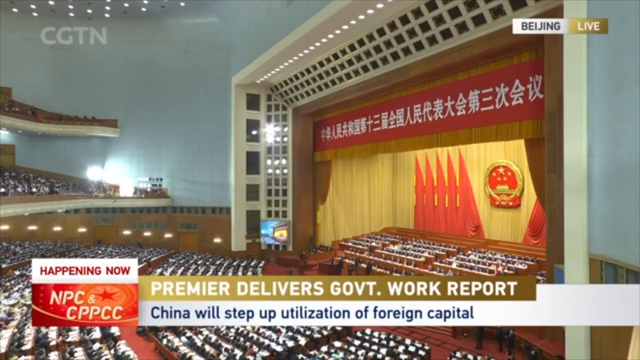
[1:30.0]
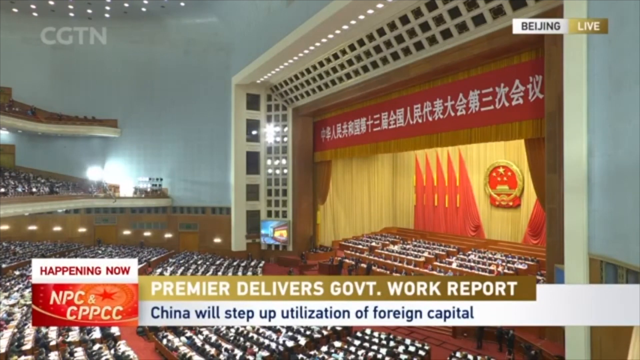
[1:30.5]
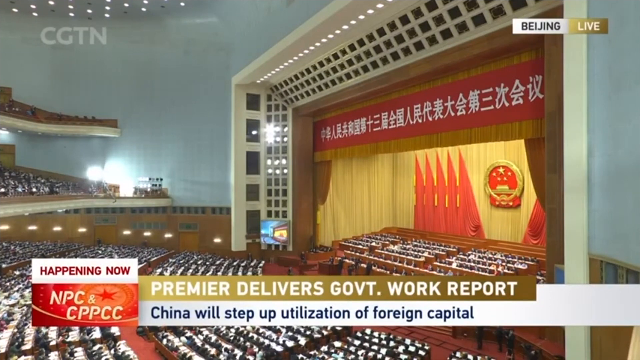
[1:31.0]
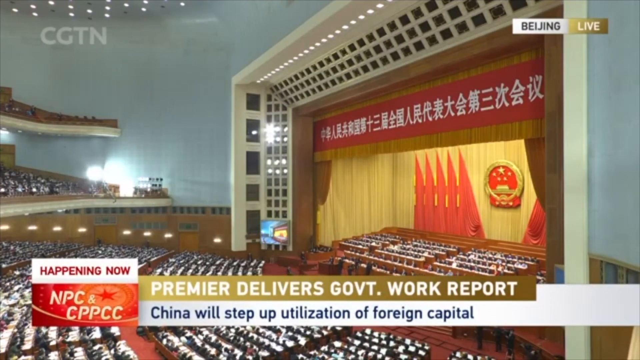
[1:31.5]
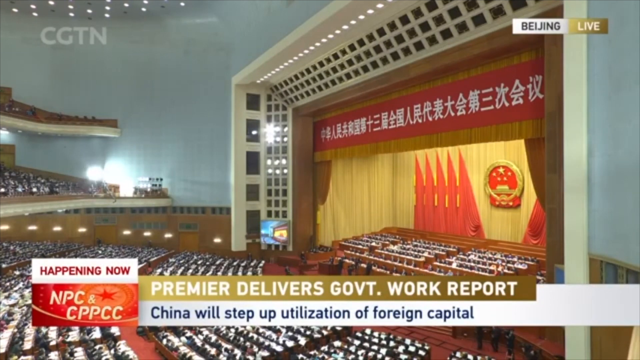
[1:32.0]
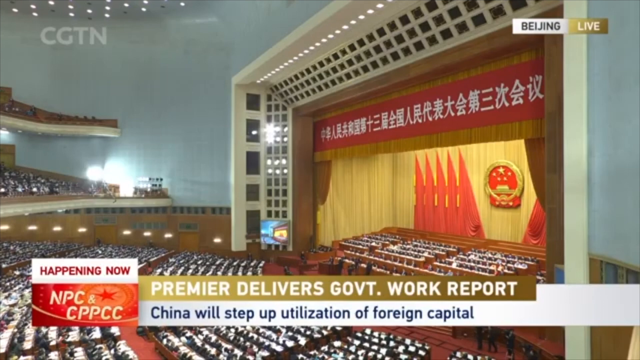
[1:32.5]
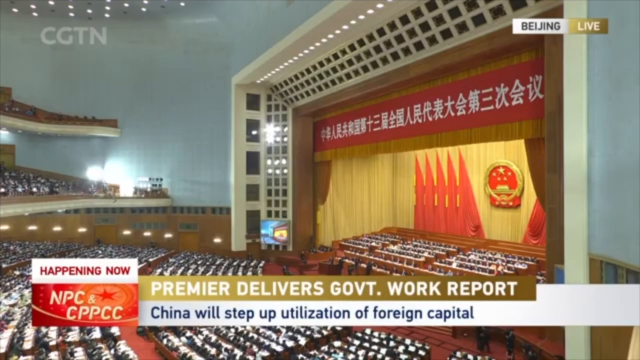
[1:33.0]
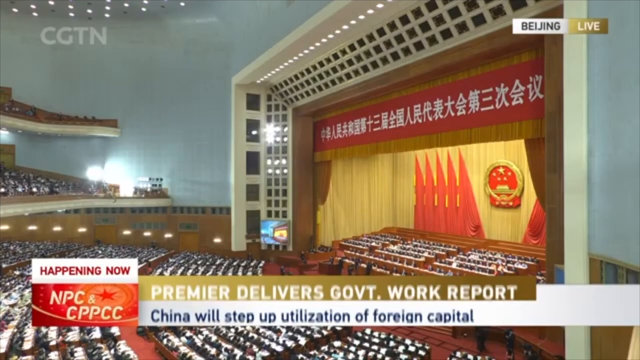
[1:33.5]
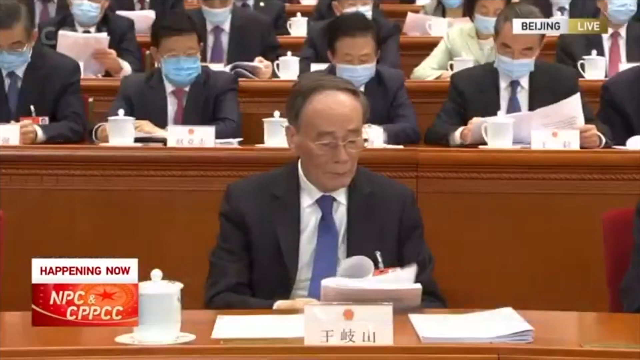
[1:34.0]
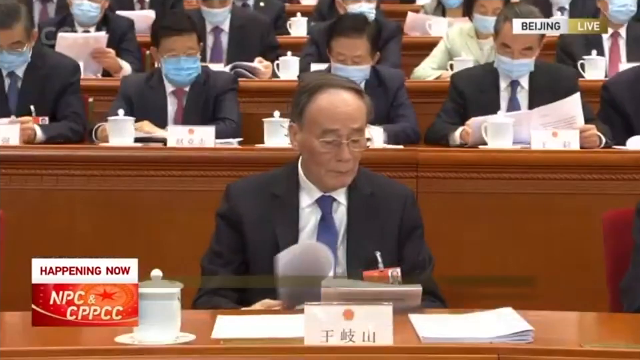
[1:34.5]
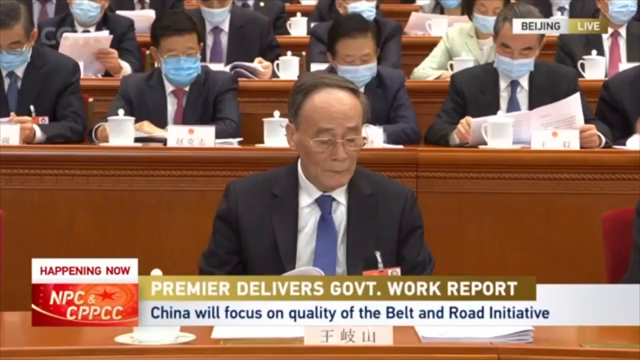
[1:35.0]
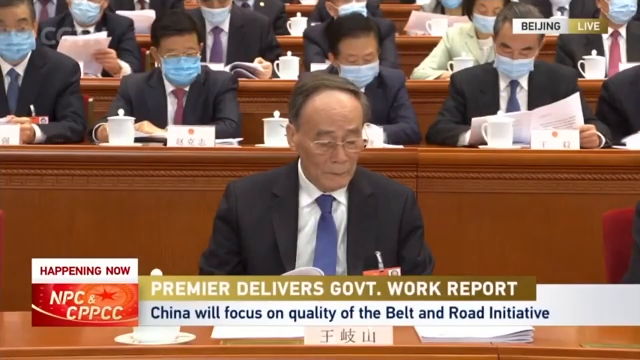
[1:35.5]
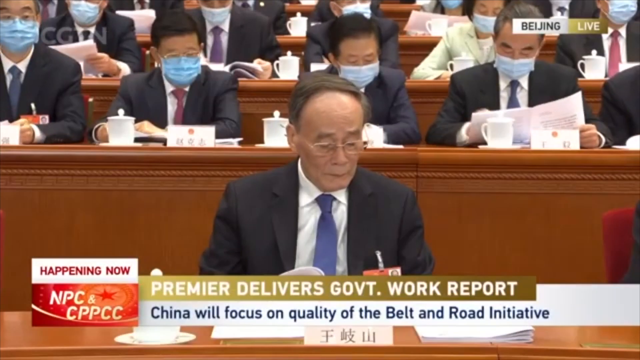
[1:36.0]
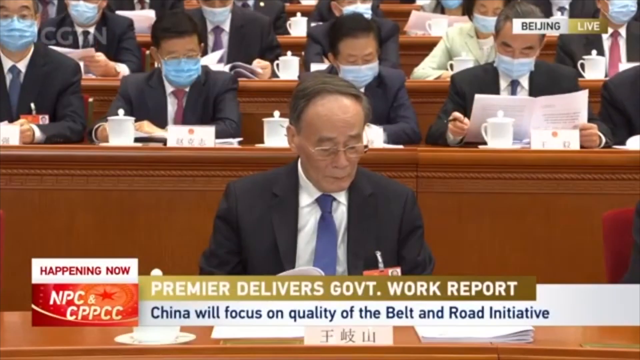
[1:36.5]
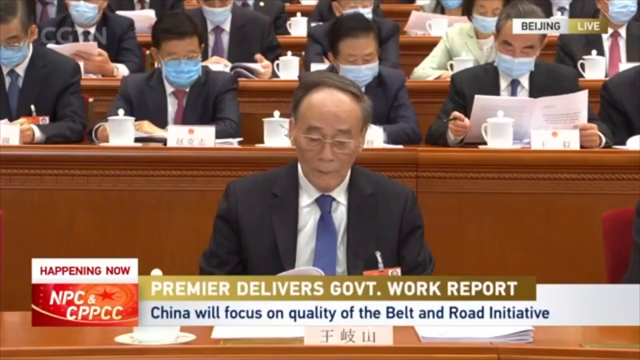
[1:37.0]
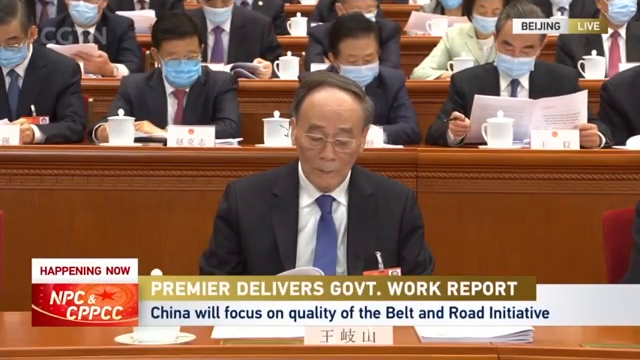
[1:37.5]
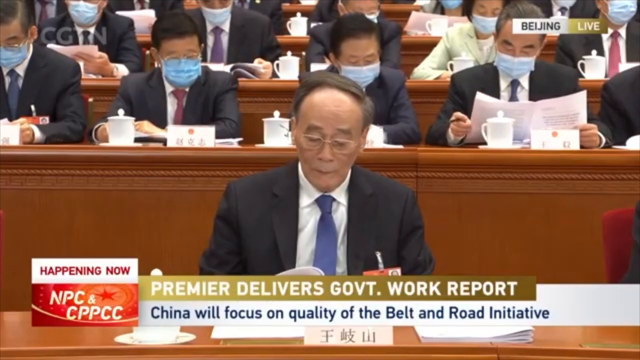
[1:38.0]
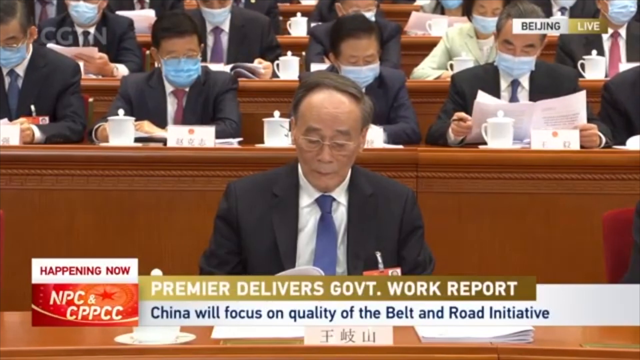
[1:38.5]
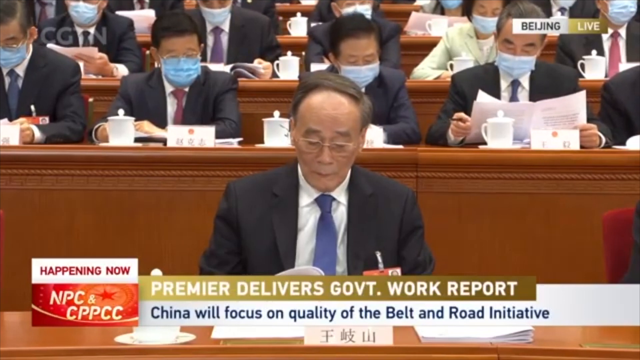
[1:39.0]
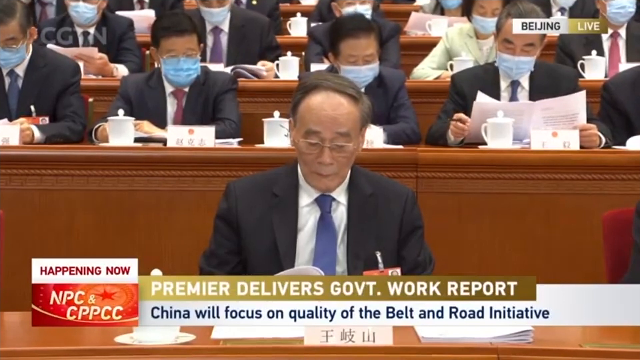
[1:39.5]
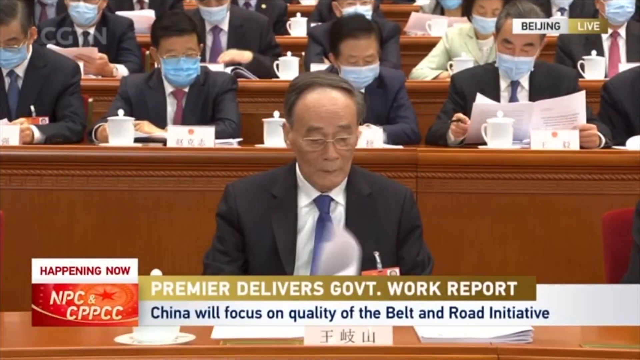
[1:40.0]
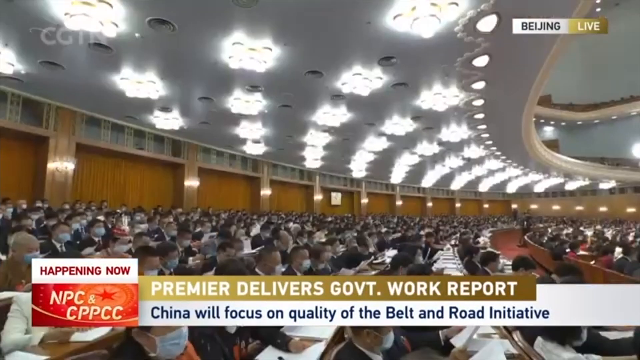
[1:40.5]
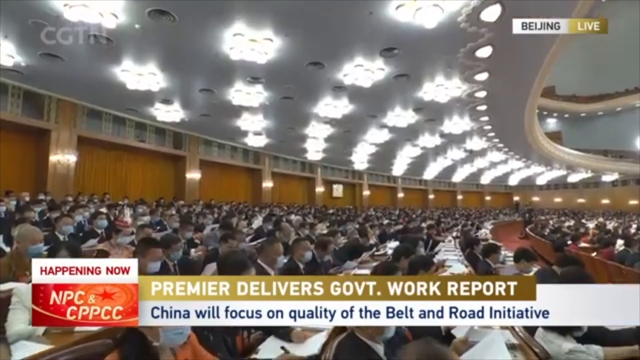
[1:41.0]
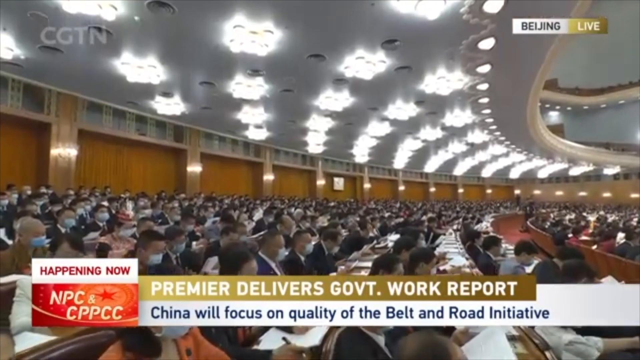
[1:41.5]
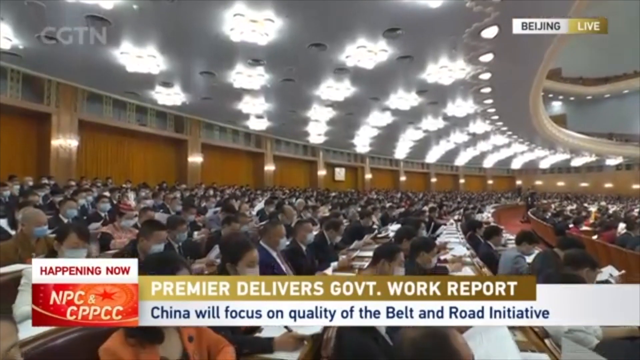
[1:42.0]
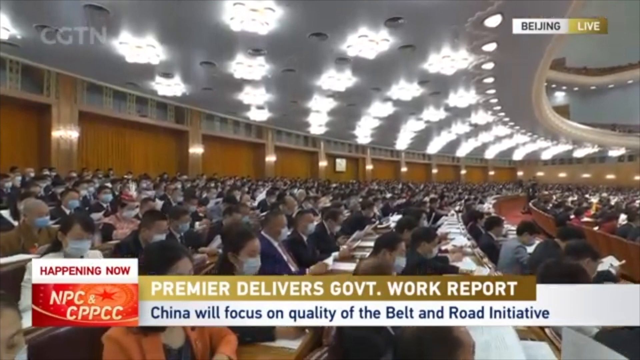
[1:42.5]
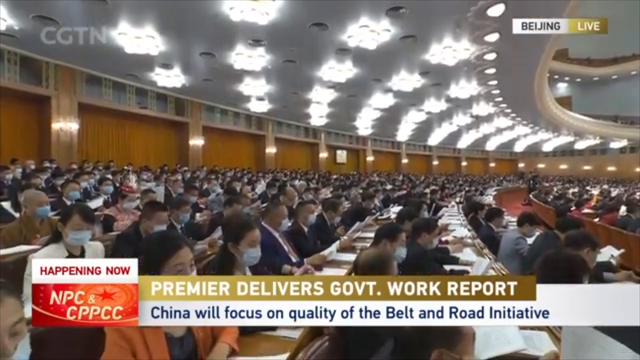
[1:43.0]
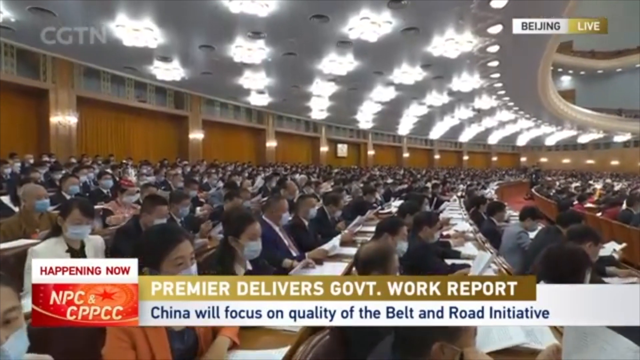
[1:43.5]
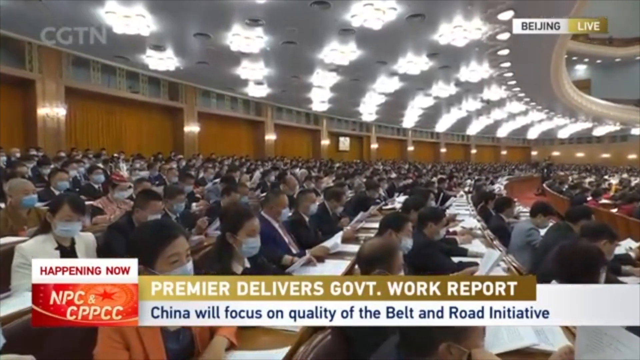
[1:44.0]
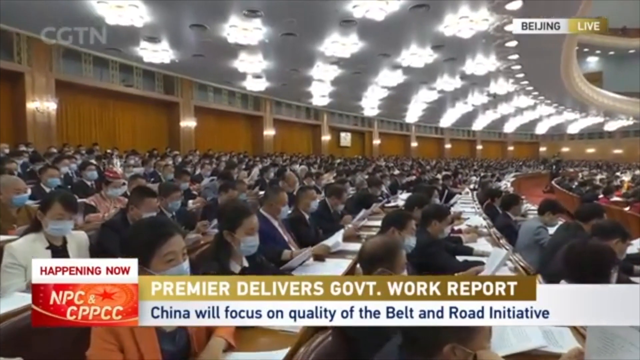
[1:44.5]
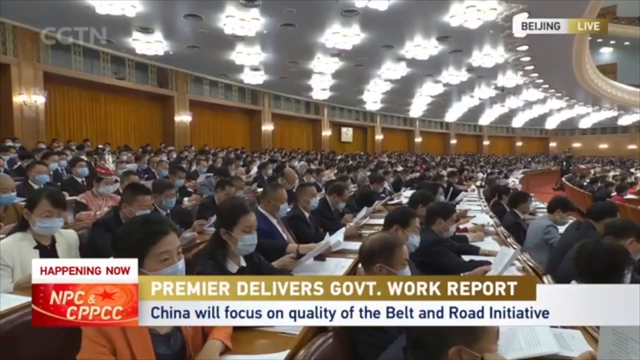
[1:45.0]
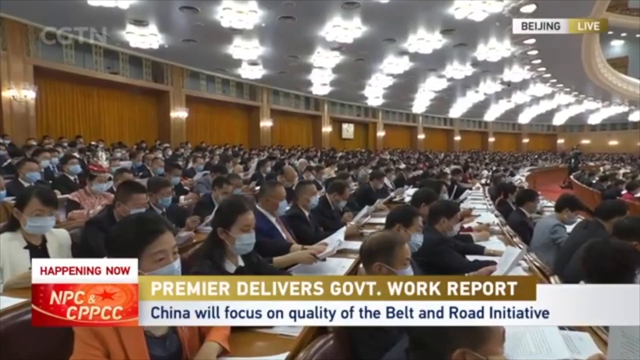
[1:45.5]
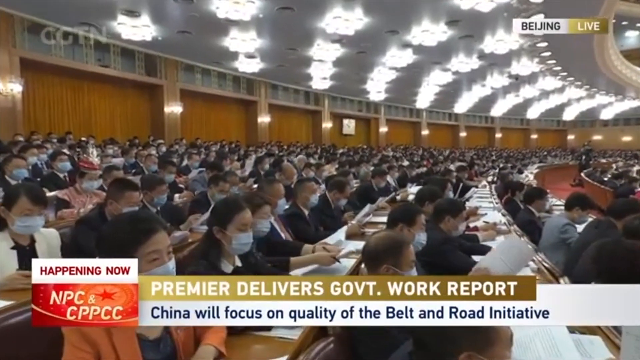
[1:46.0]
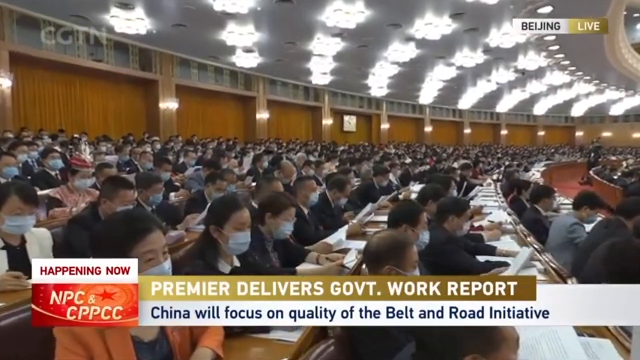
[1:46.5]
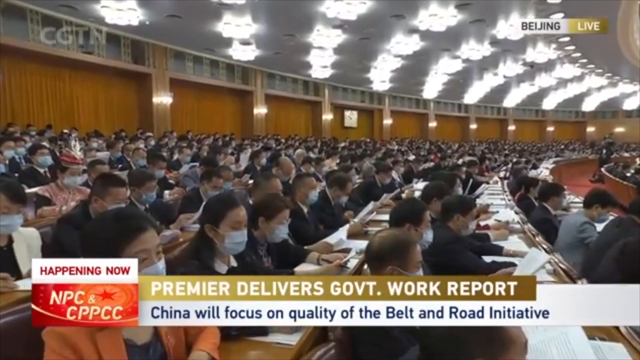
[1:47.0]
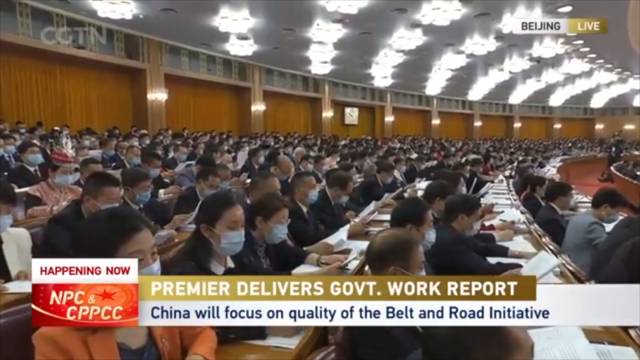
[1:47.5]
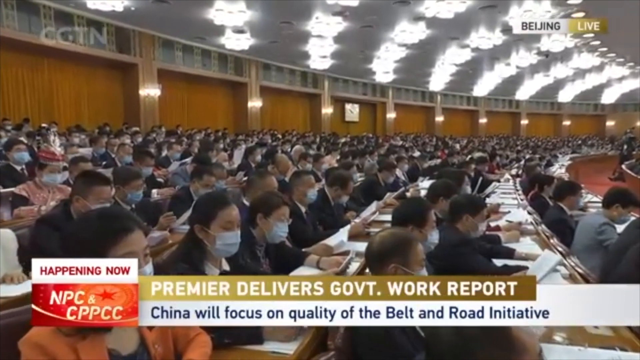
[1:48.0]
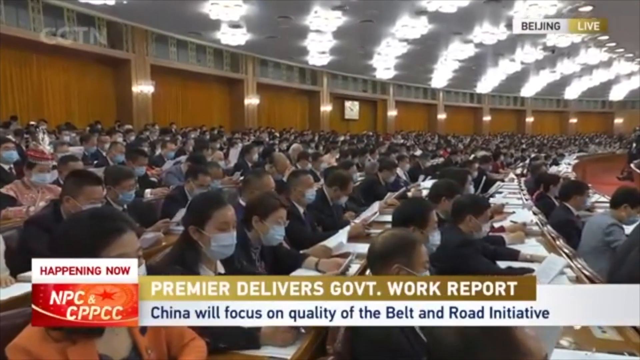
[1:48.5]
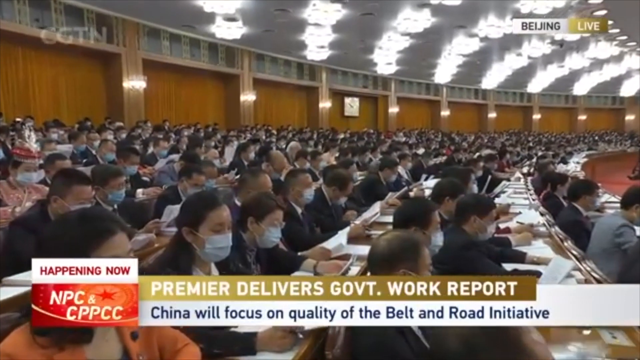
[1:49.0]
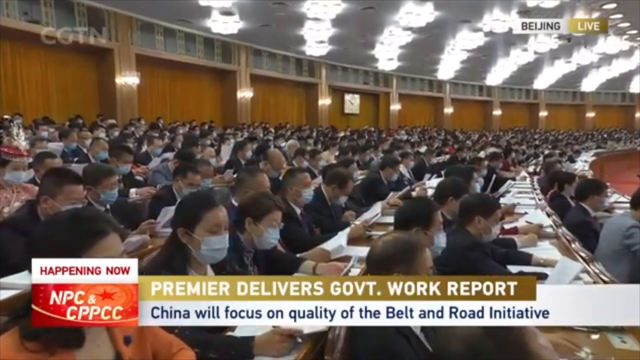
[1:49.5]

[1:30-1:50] The camera looks down at the building, then shows an older gentleman in a black suit scrolling through a group of papers. The lower third changes to "China will focus on quality of the Belt and Road Initiative". The camera pans to the government officials in the back rows, all looking at the same style of document. They all seem to have masks on and look very uniform as they sit at various wooden desks. Everybody seems to be intently looking at the jobs report, and nobody seems to be doing anything different from the group. Bright lights on the ceiling have a floral-looking pattern and are scattered throughout the arc of the ceiling.